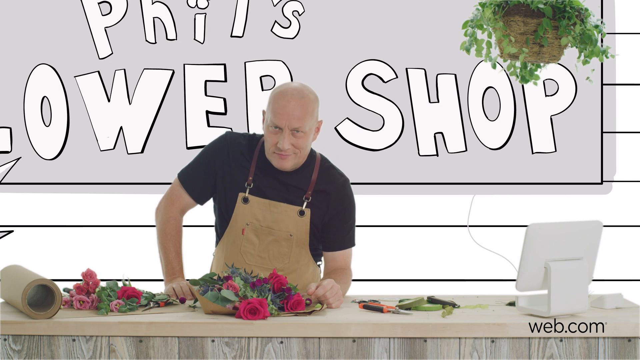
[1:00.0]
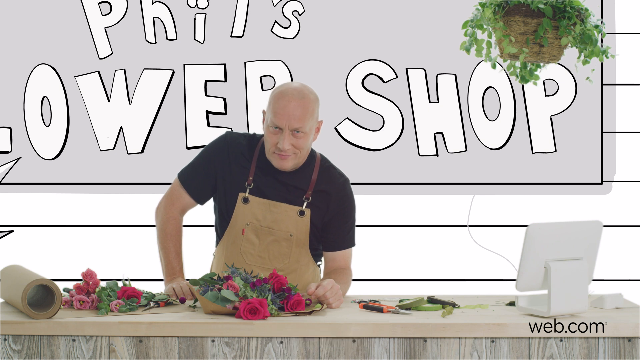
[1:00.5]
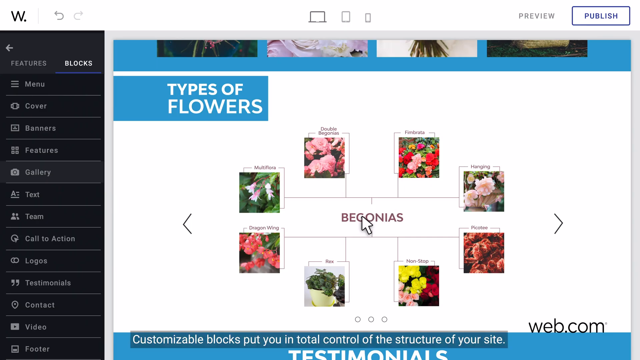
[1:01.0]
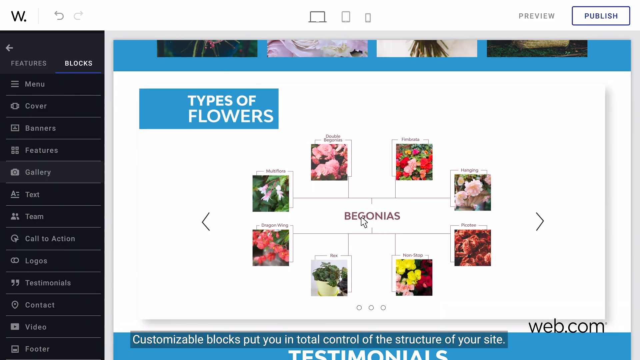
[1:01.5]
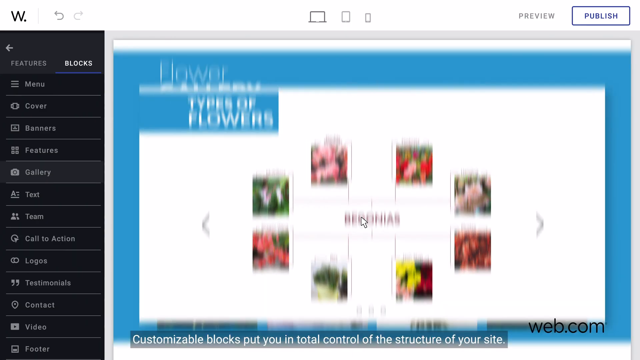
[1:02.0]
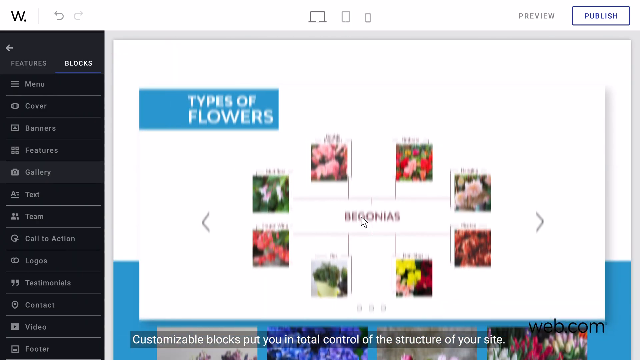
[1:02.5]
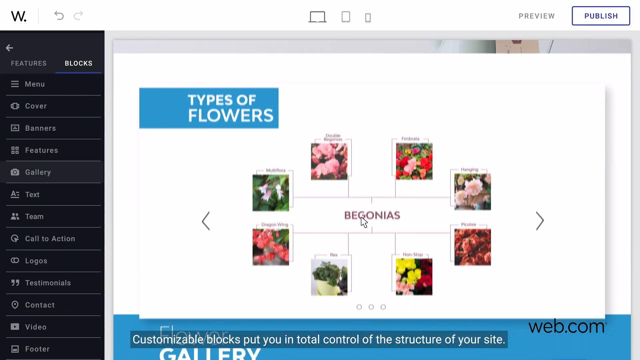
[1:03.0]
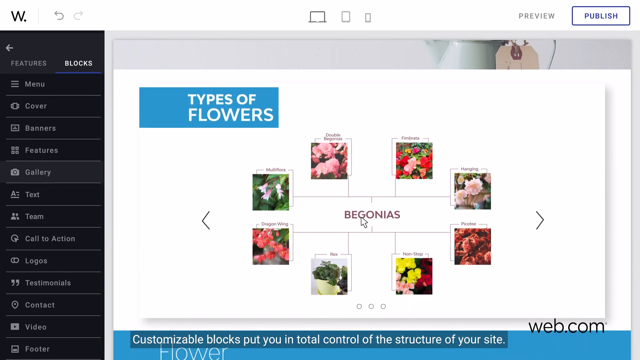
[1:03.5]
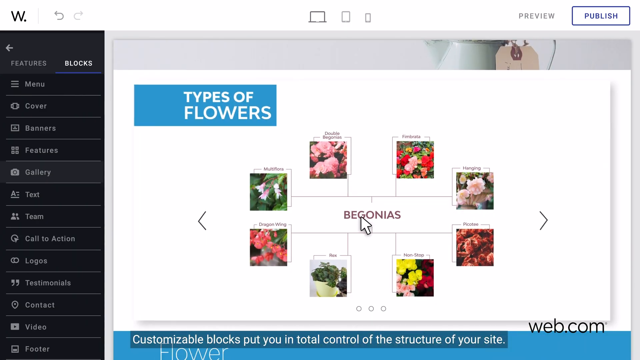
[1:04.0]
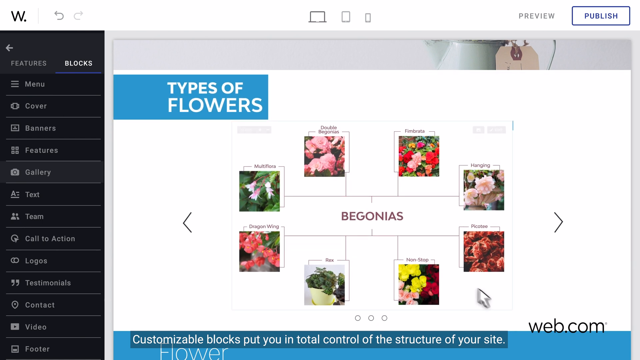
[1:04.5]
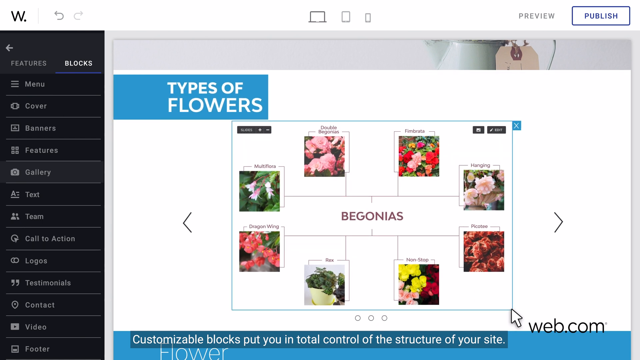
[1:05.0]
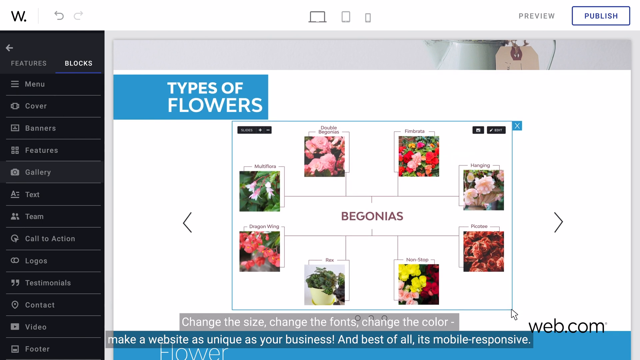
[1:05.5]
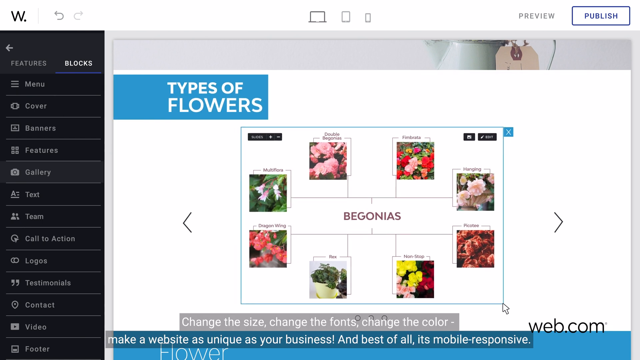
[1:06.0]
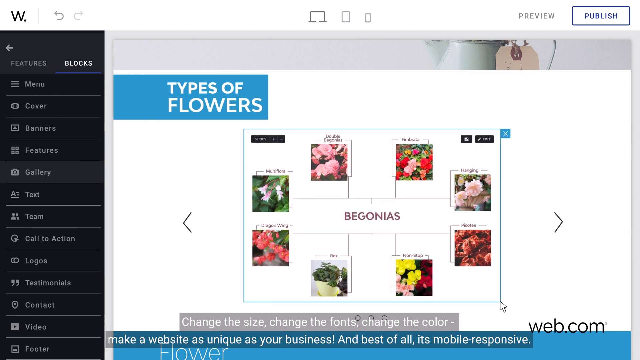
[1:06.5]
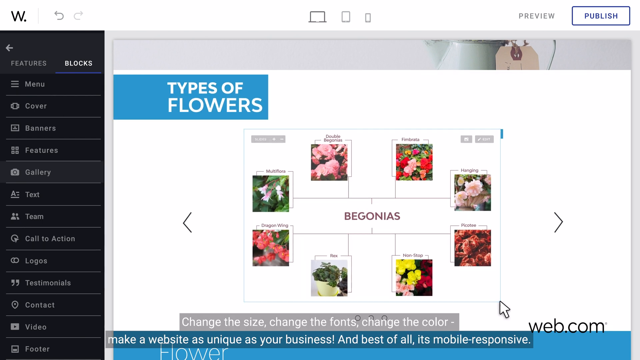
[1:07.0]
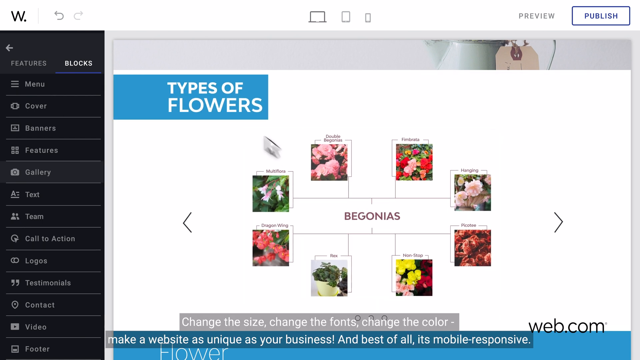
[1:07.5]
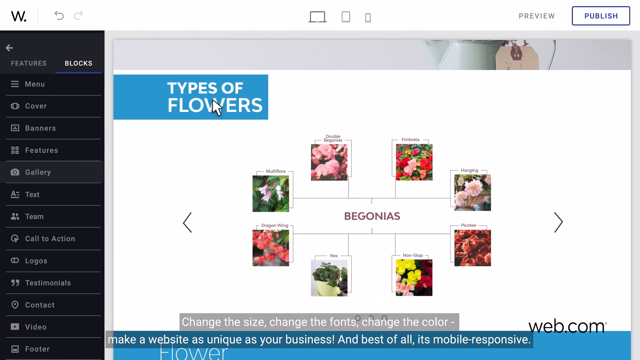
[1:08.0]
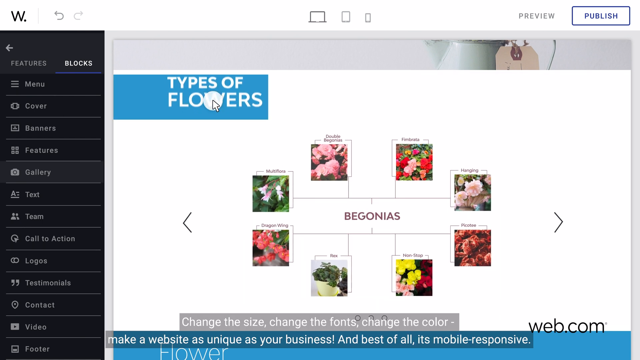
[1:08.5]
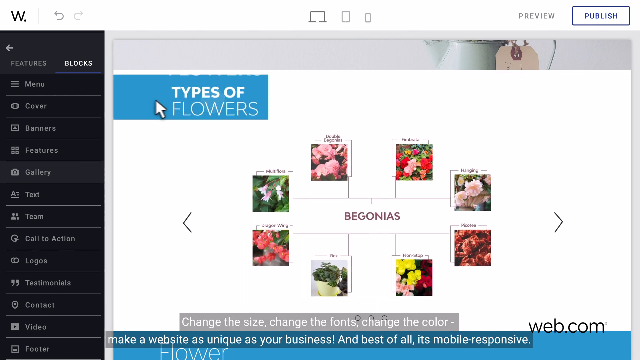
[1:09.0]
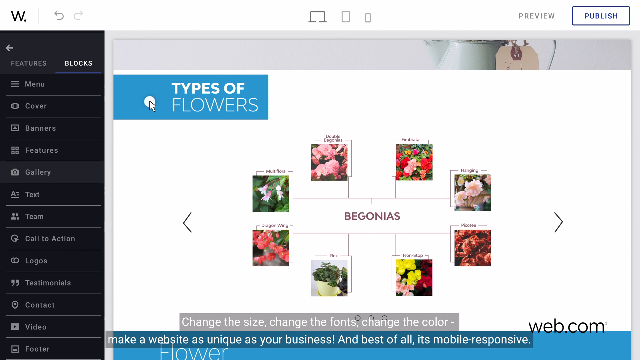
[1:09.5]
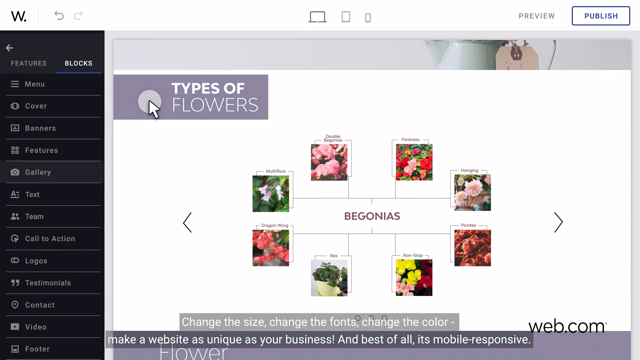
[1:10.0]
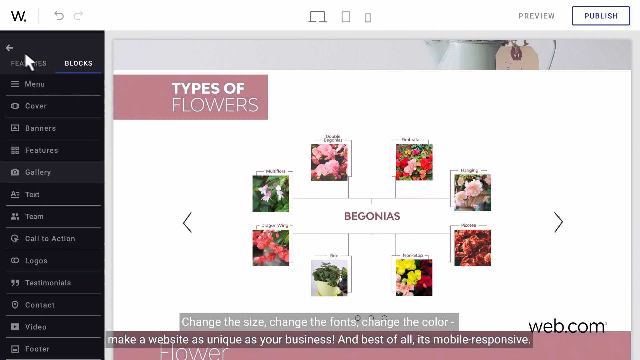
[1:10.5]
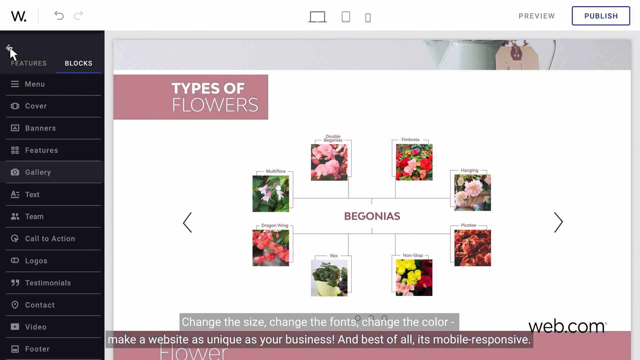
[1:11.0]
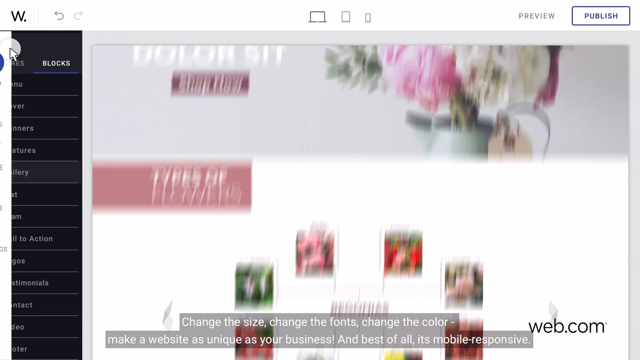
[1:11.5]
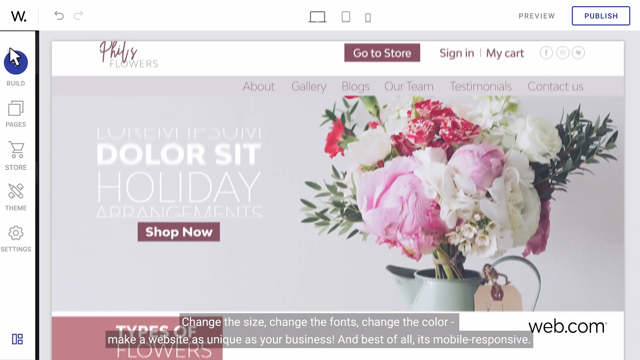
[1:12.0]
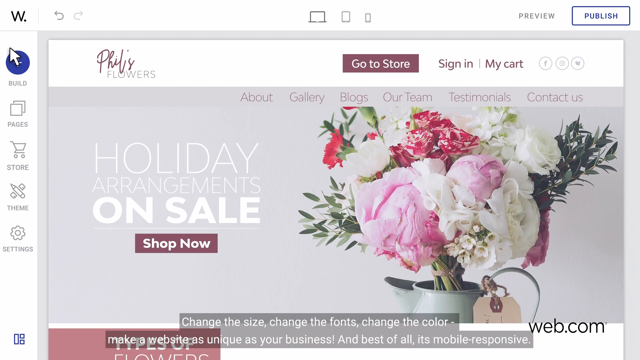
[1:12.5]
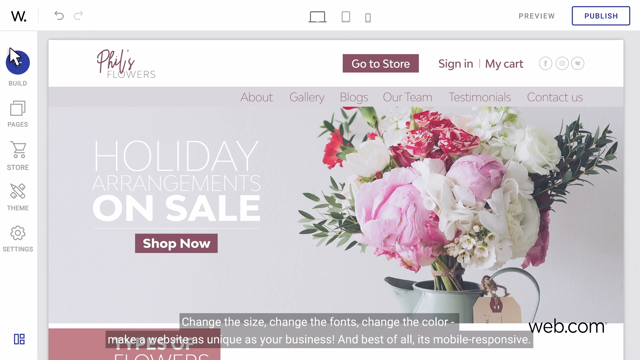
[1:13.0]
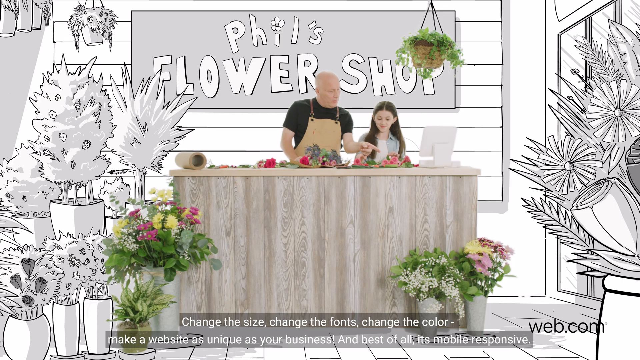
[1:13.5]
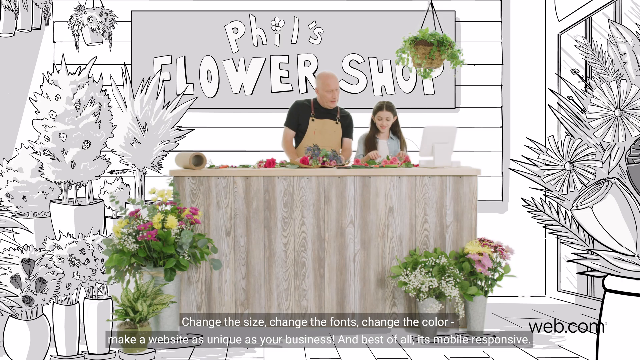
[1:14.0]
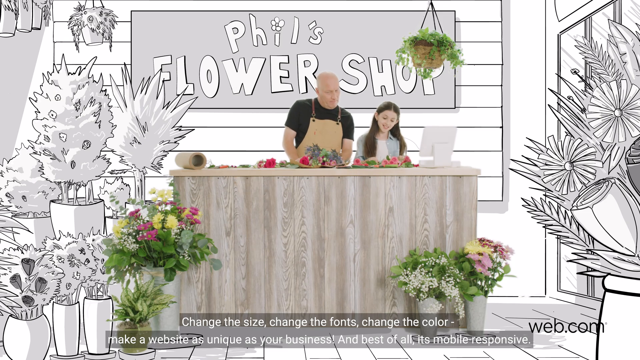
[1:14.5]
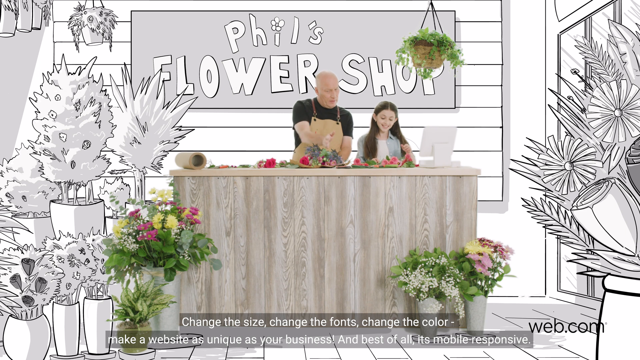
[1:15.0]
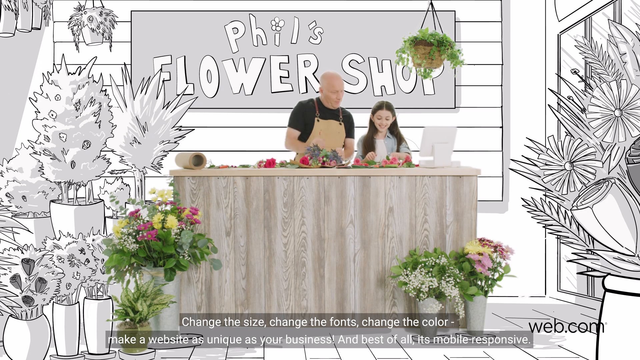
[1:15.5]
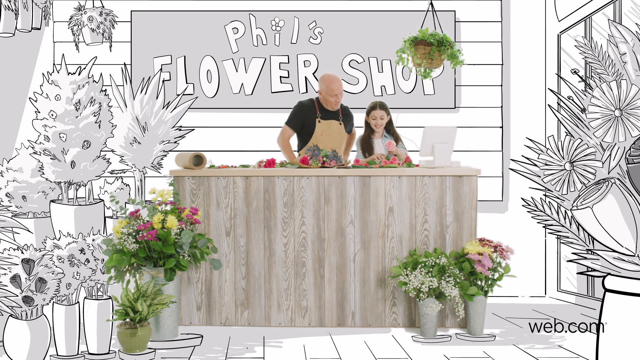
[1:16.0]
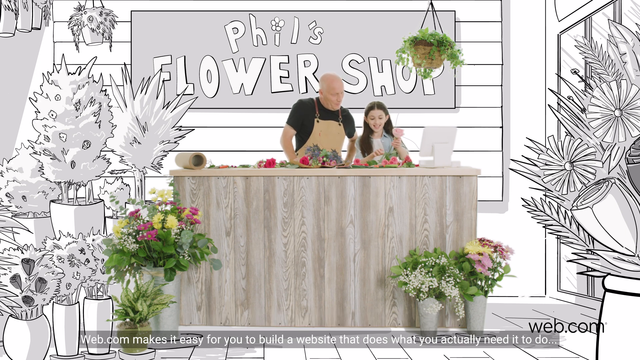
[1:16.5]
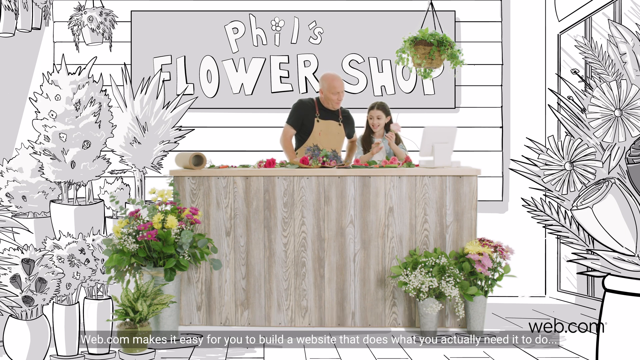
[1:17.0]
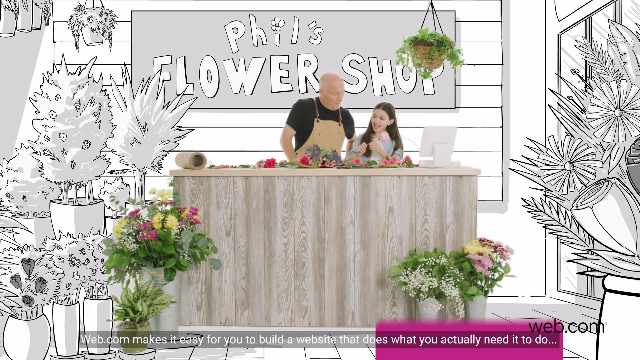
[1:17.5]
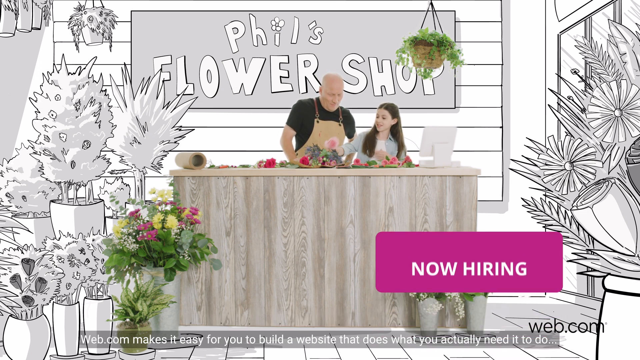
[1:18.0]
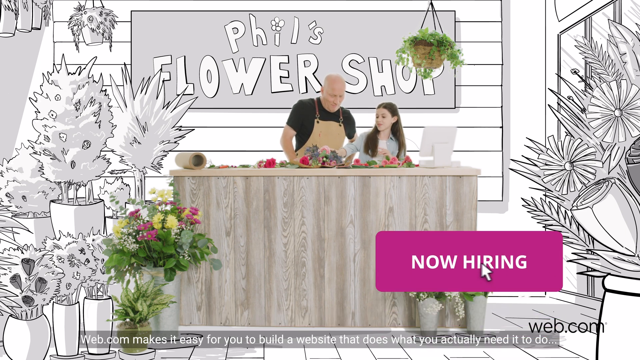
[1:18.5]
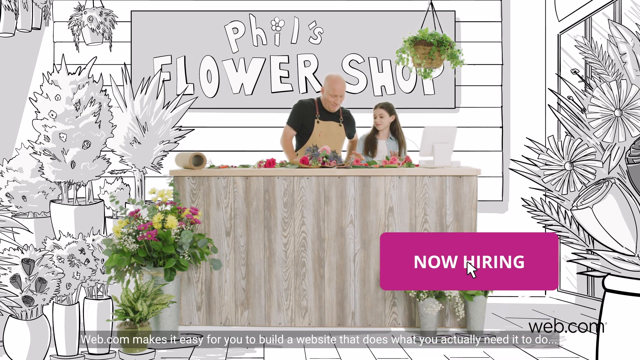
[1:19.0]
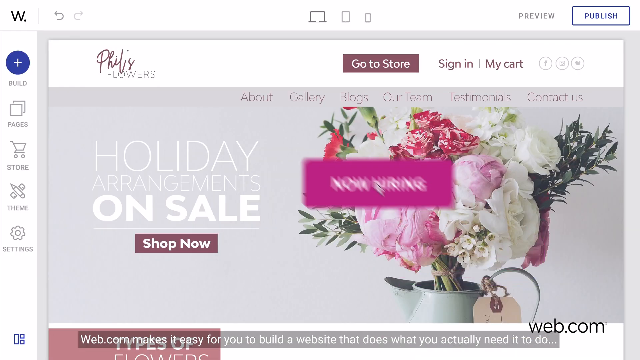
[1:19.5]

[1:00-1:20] The types-of-flowers selection tool with begonias and the images is shown. A subtitle says "change the size, change the fonts, change the color, make a website as unique as your business and best of all it's mobile responsive". The video is some kind of advertisement for a website builder tool called web.com. The mouse pointer clicks on types of flowers, changing its color from blue to kind of pink. The shot then switches to the man in the flower shop with the cartoon background saying "Phil's flower shop" and the photo-style counter with flower vases in front. The man, in a black t-shirt and tan apron, stands behind the counter leaning on it with both hands. The same girl as earlier is next to him, smiling and looking at the flowers in front of her; she looks like she is doing some kind of arrangement, and the man looks at what she is doing on the counter. The girl picks up what looks like a pink rose and adds it to the arrangement in front of the man. The view then switches to the website builder tool showing the Phil's flowers website, where a "now hiring" button is dragged into the website: a purple, rectangular button with rounded edges and "now hiring" in a white font.